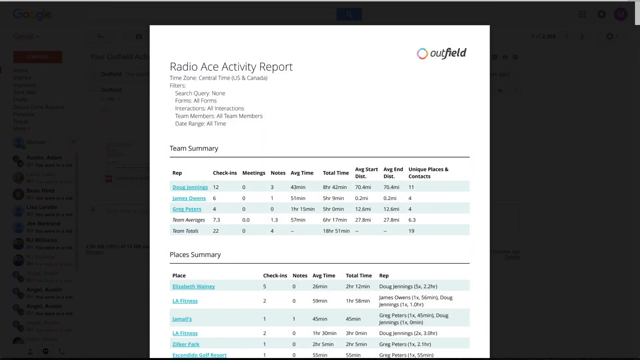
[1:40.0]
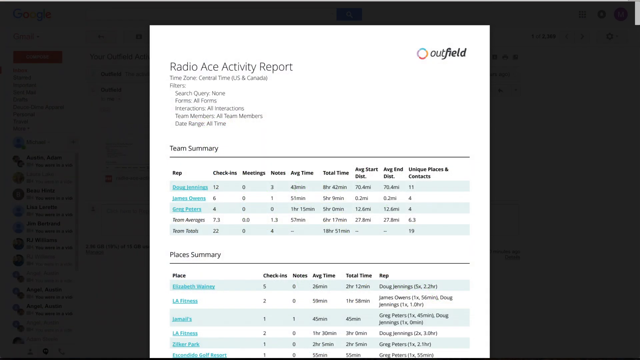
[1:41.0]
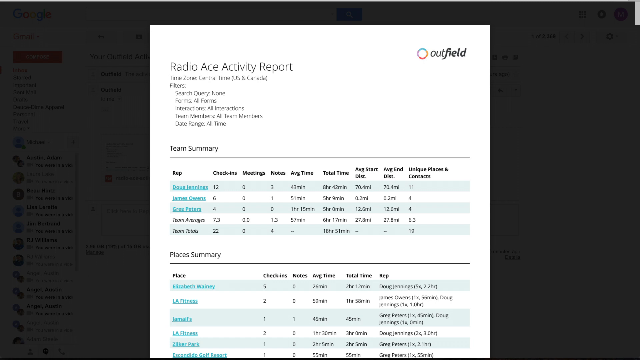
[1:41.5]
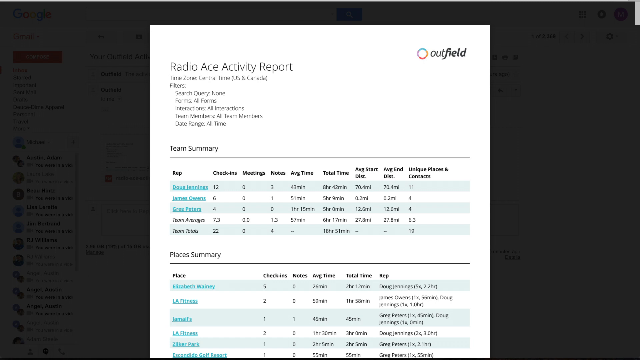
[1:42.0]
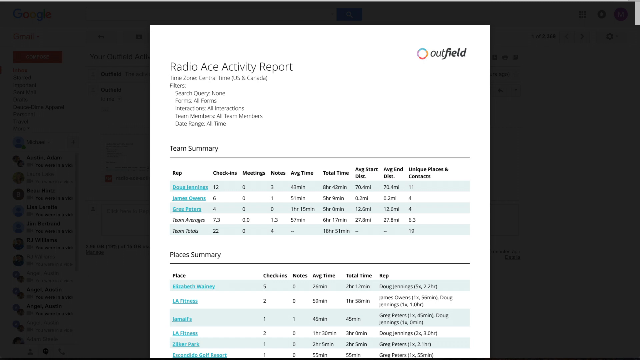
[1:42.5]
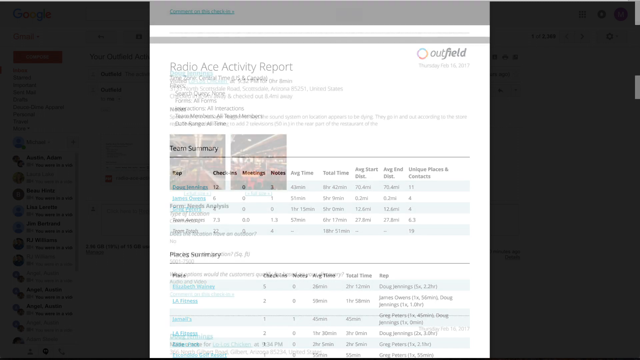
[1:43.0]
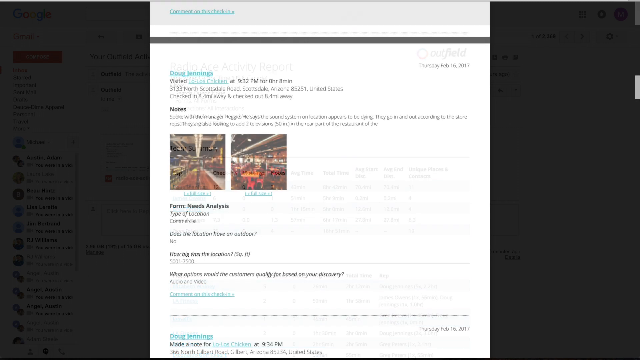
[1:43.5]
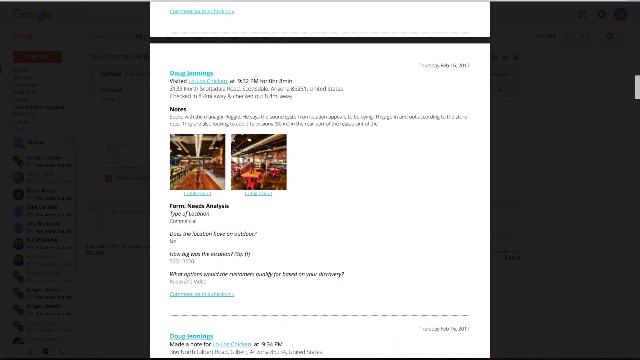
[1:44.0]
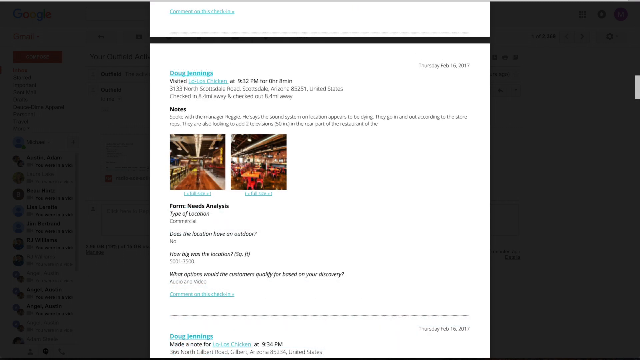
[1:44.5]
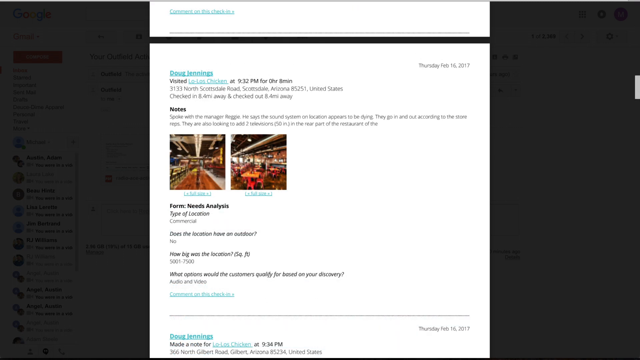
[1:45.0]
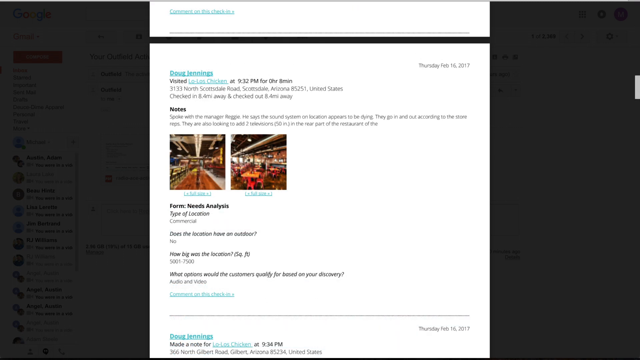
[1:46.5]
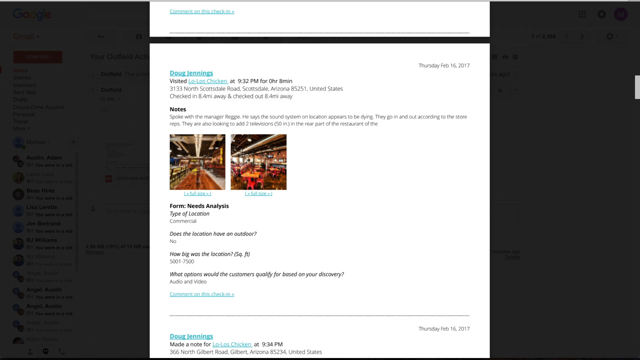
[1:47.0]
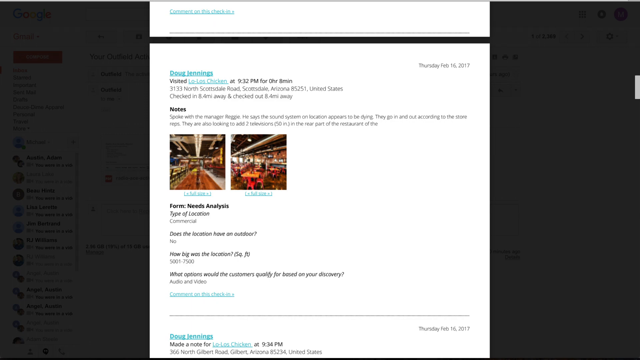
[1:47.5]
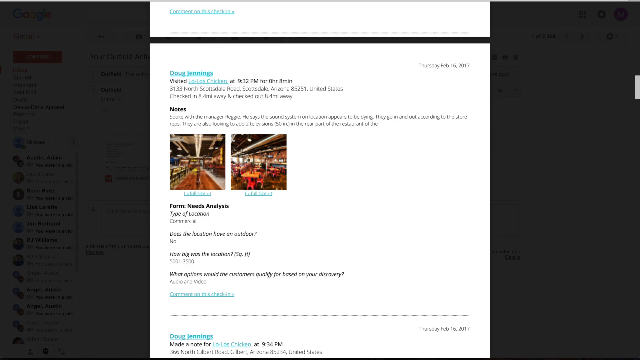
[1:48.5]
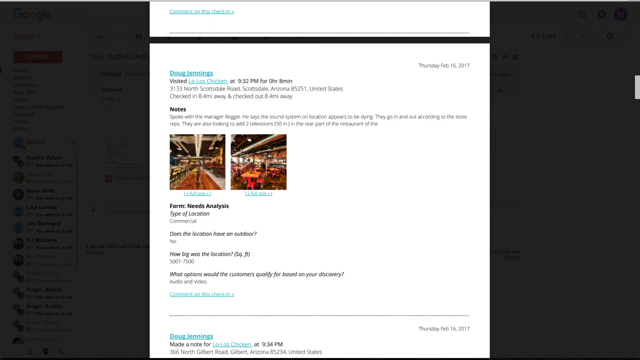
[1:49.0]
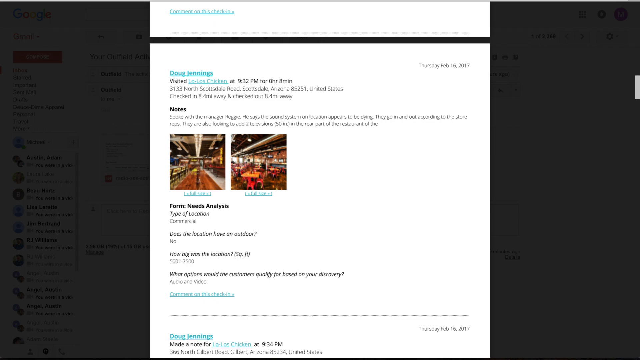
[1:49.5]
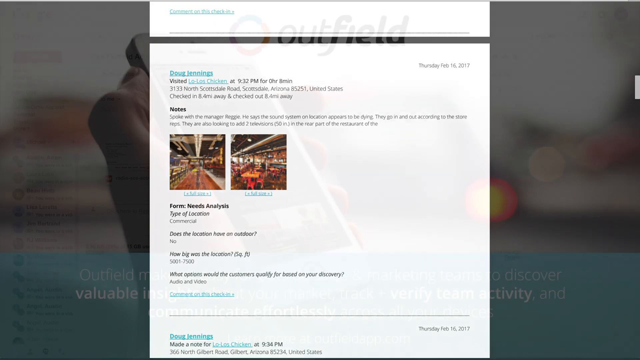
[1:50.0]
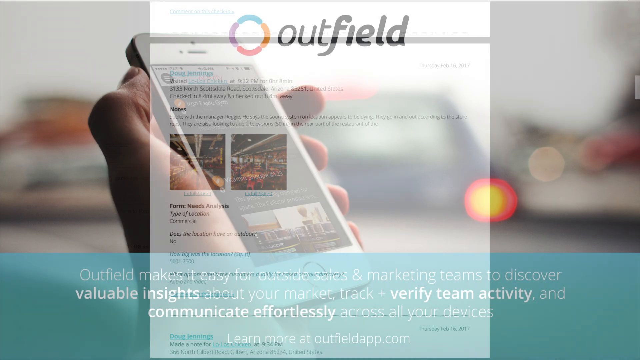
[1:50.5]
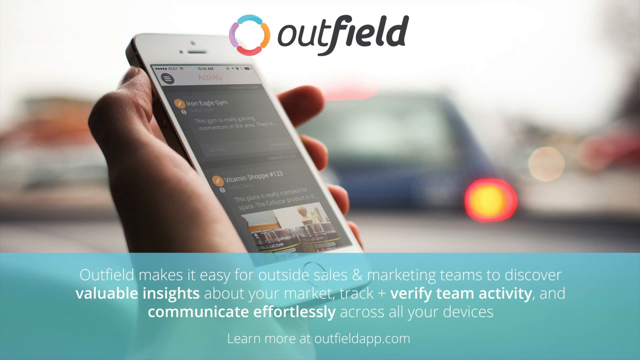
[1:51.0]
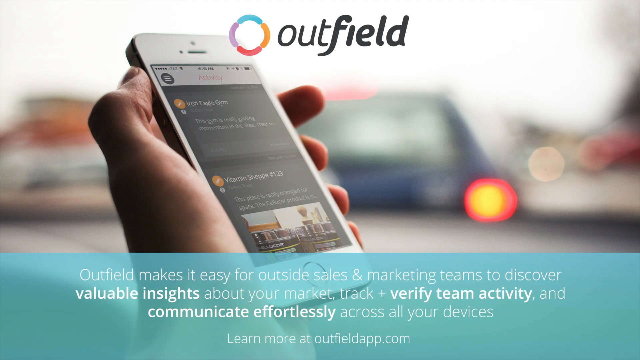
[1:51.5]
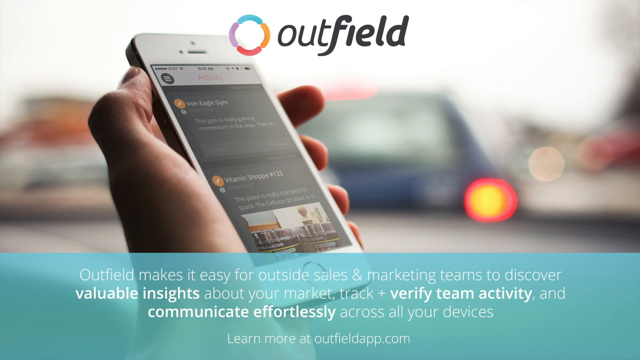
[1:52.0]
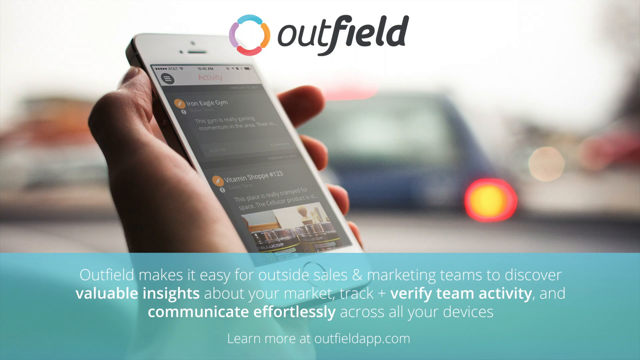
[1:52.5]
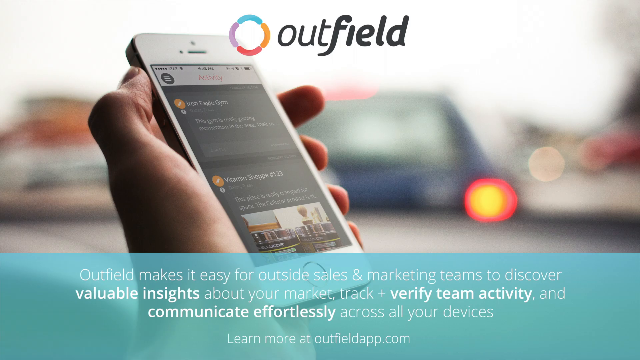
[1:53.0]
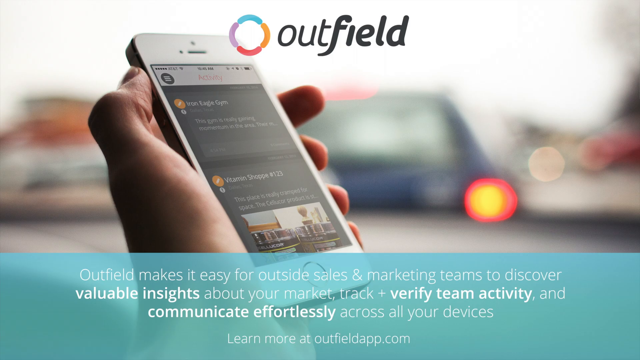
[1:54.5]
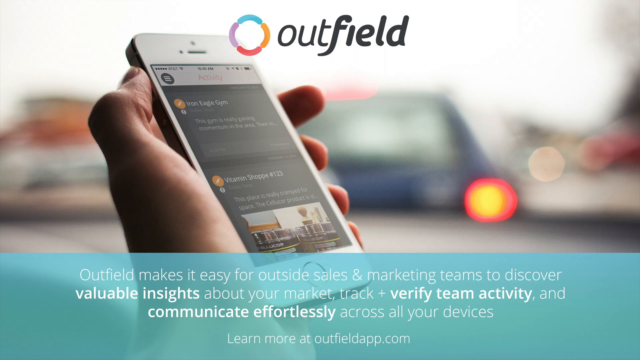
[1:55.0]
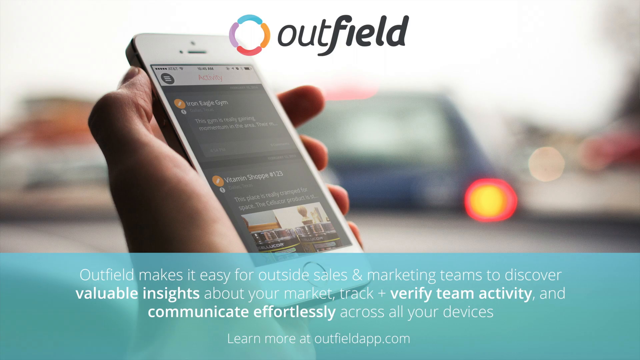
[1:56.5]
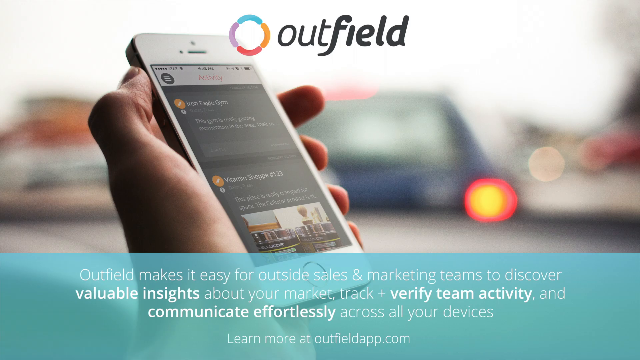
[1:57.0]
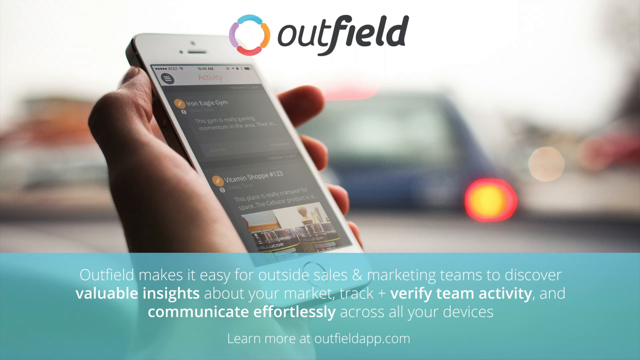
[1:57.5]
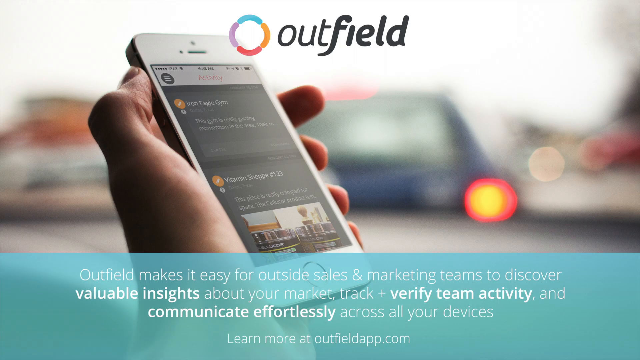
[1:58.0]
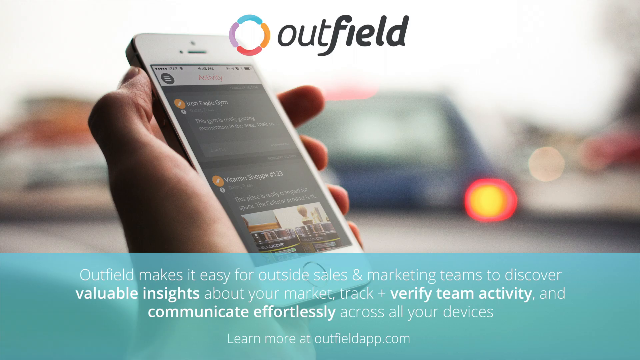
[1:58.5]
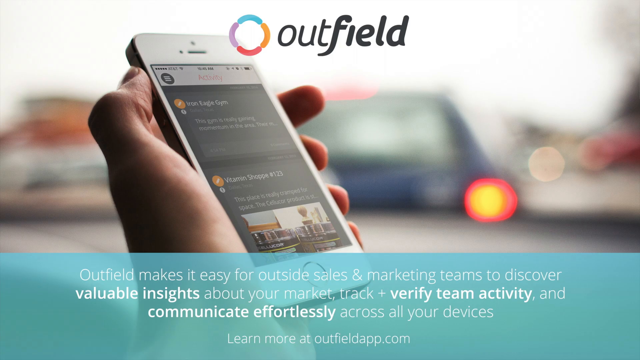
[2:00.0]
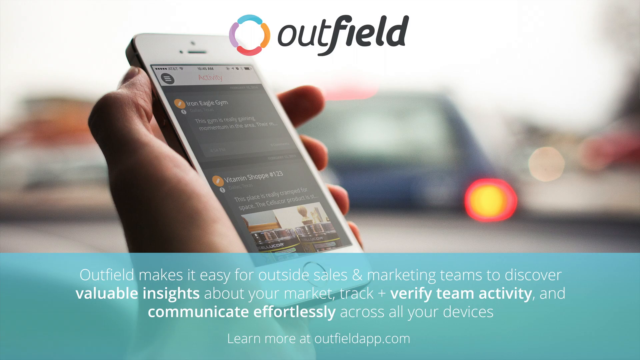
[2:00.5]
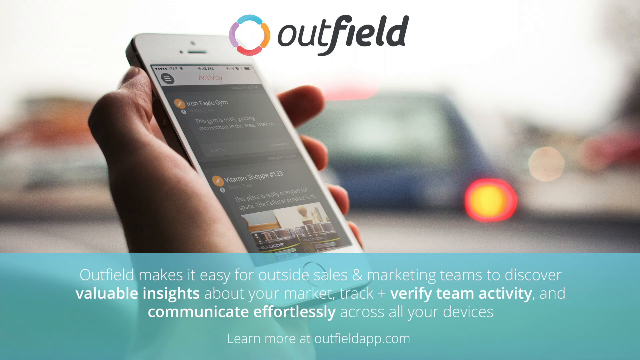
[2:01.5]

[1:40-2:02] A report has apparently been pulled up by Doug Jennings, titled "Radio Ace Activity Report" in the upper left-hand corner. It appears to list "time zone", "central time (US and Canada)", "filters", "search query", "none", "forms", "interactions", "team members" and "date range". Then it says "team summaries", with a thin black line across, and then "reps". The names include Doug Jennings and another name possibly starting with J that cannot be read. Column headings follow: "check-ins", "meetings", "notes", "average time", "total time", "average start" with a blurry word underneath, "average end", "unique places" and "contacts", then "switches". Doug apparently visited somewhere around 9. Then the report goes off, and the first image from the beginning is shown, with the person holding the phone in their left hand.